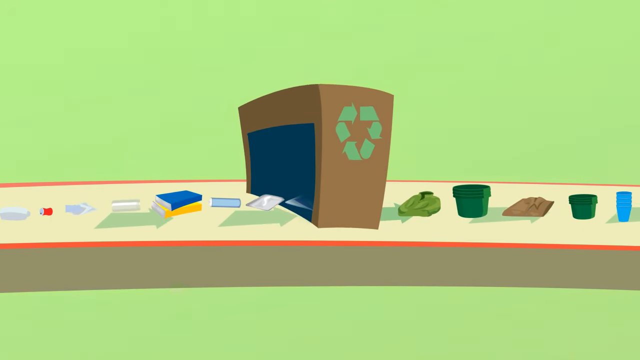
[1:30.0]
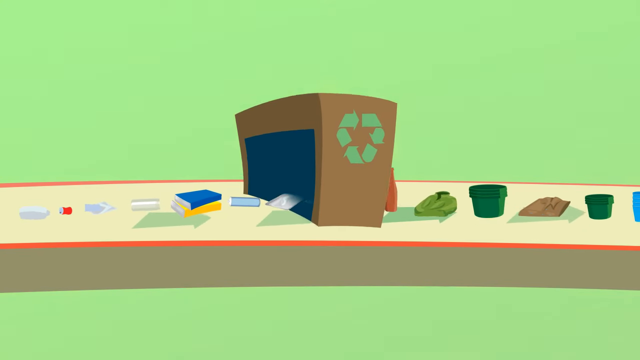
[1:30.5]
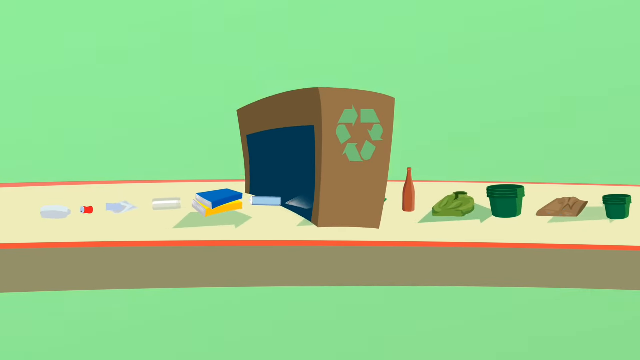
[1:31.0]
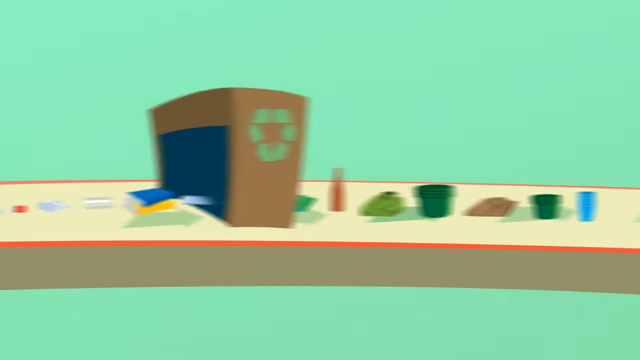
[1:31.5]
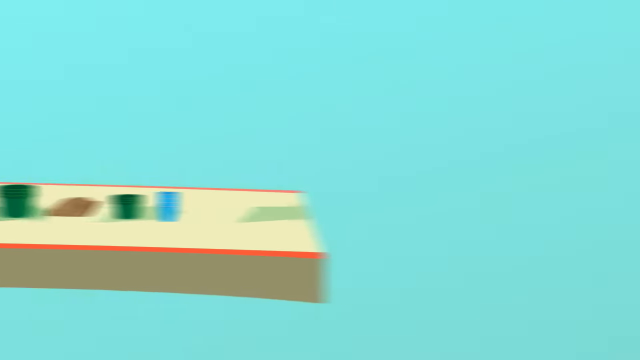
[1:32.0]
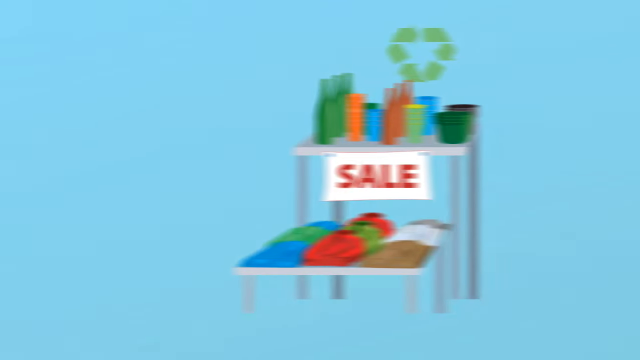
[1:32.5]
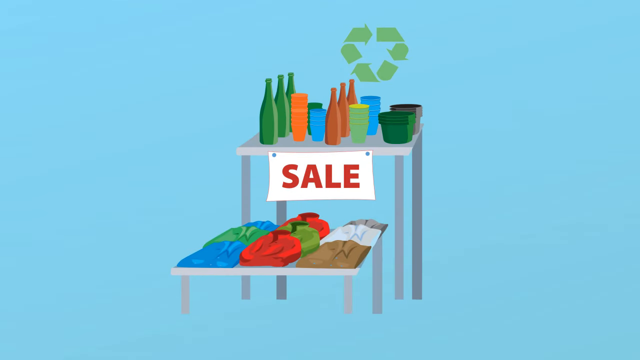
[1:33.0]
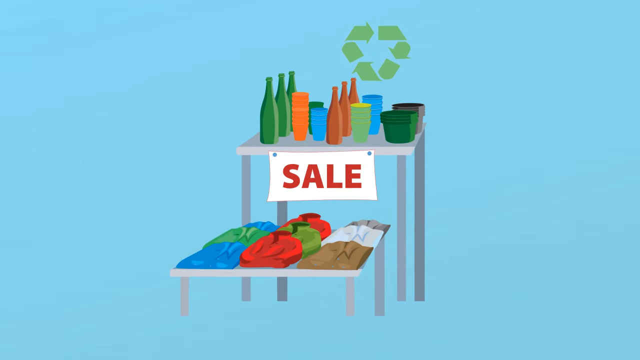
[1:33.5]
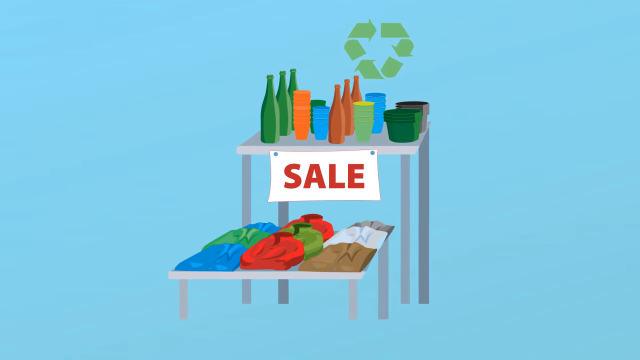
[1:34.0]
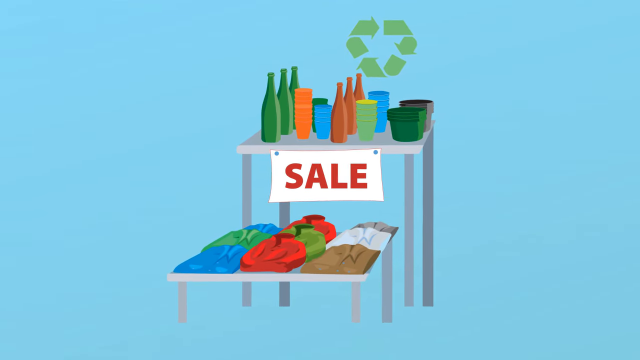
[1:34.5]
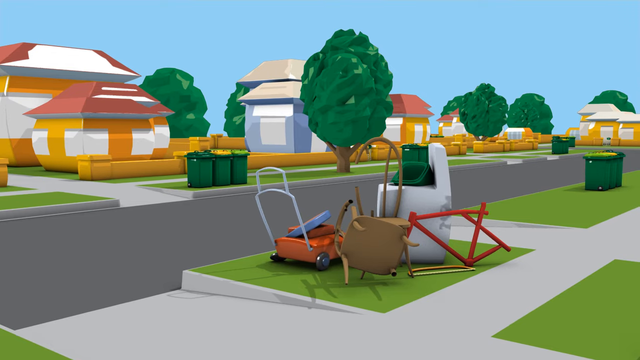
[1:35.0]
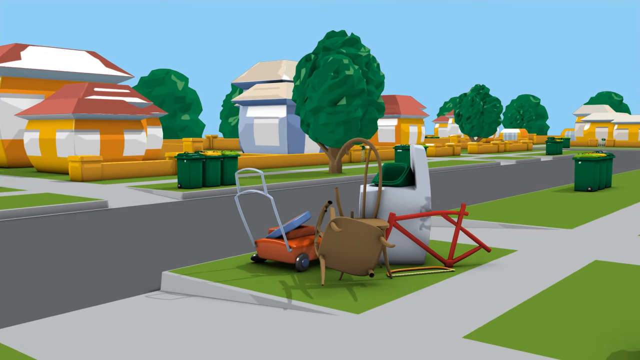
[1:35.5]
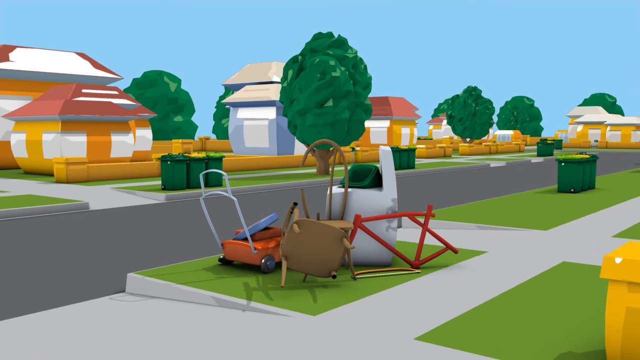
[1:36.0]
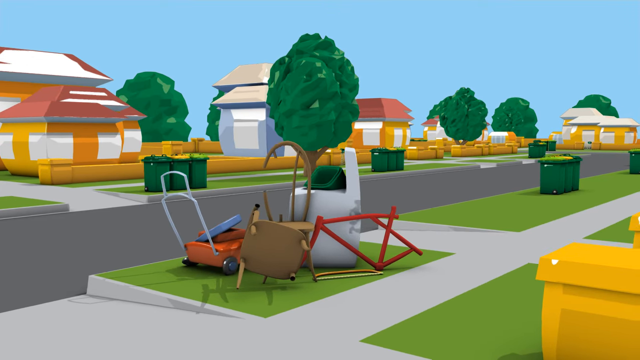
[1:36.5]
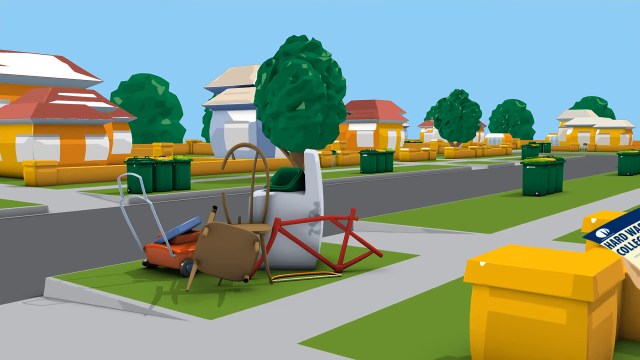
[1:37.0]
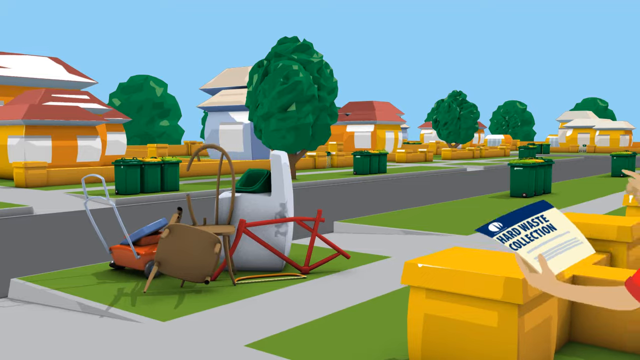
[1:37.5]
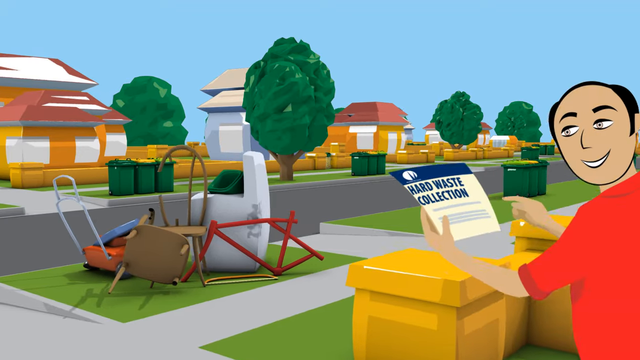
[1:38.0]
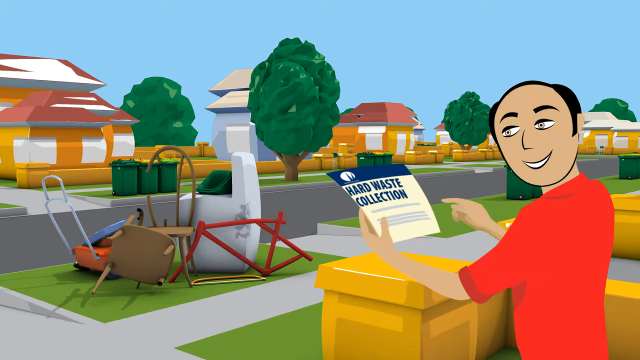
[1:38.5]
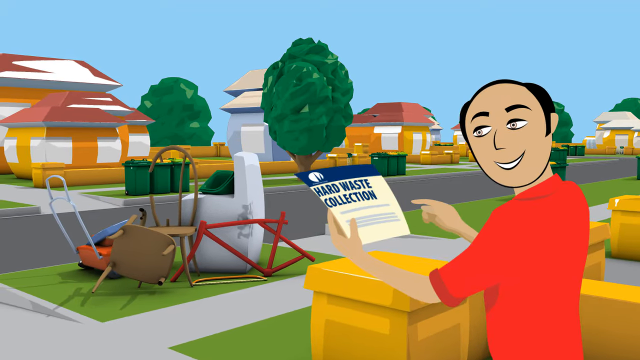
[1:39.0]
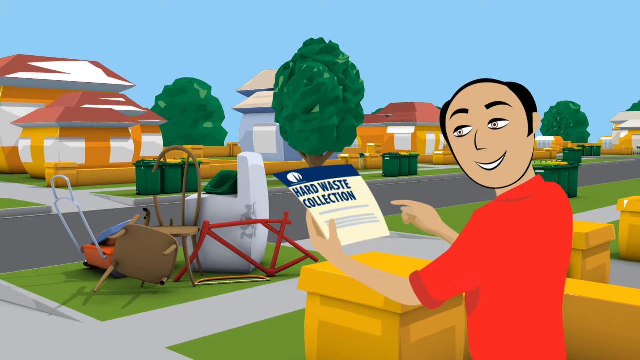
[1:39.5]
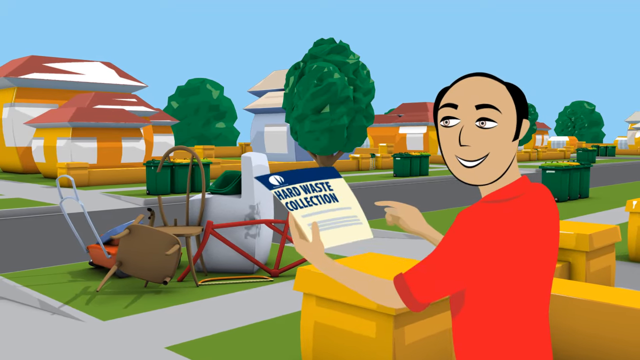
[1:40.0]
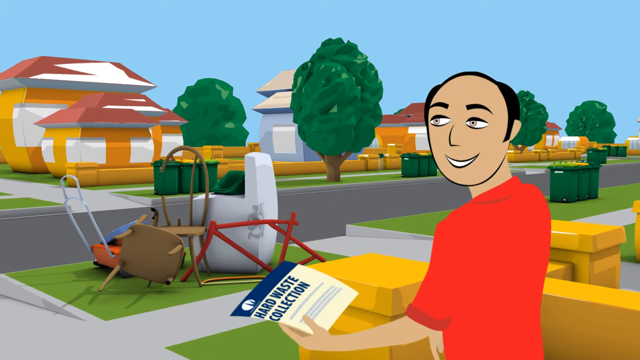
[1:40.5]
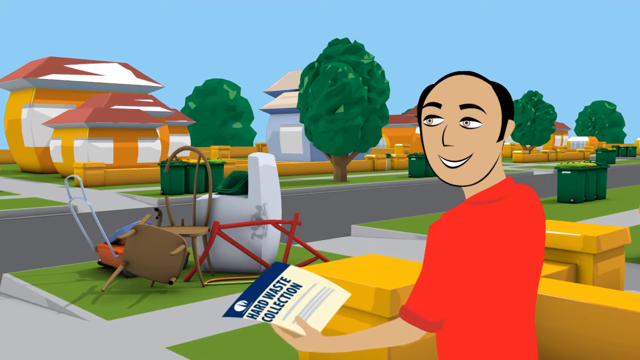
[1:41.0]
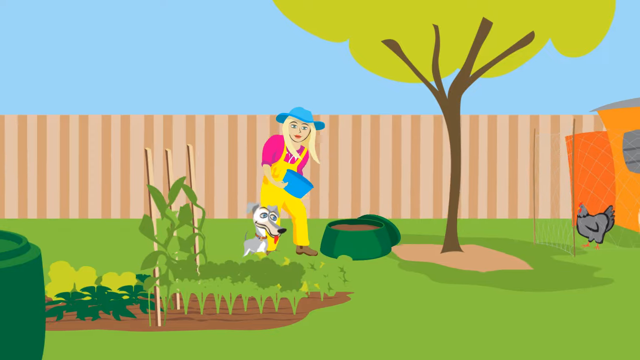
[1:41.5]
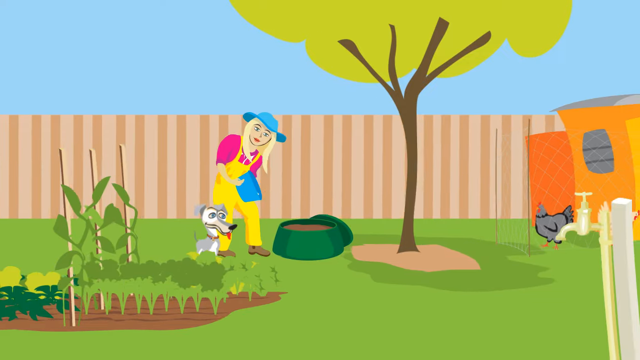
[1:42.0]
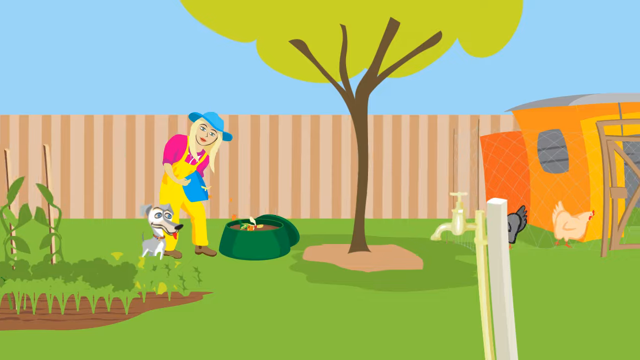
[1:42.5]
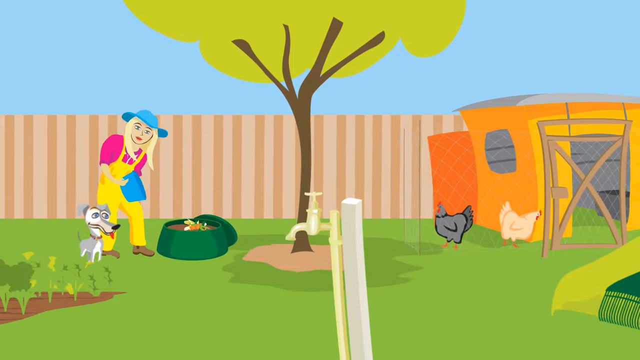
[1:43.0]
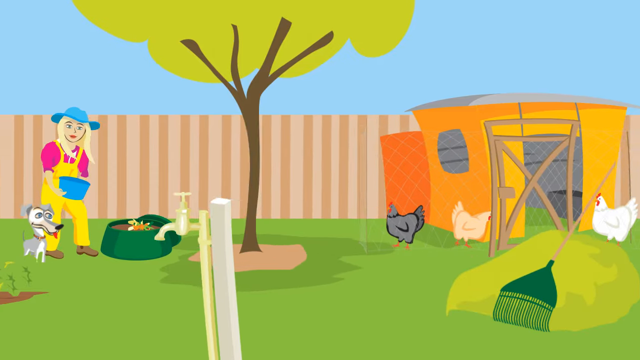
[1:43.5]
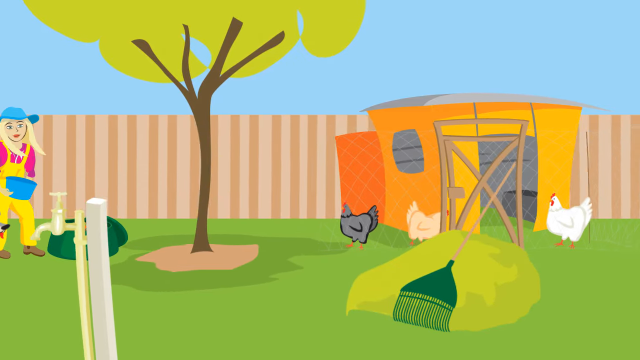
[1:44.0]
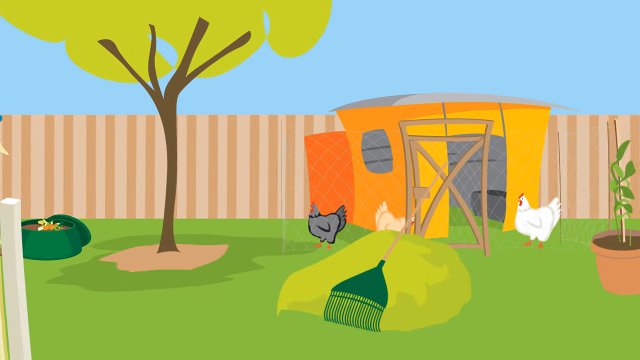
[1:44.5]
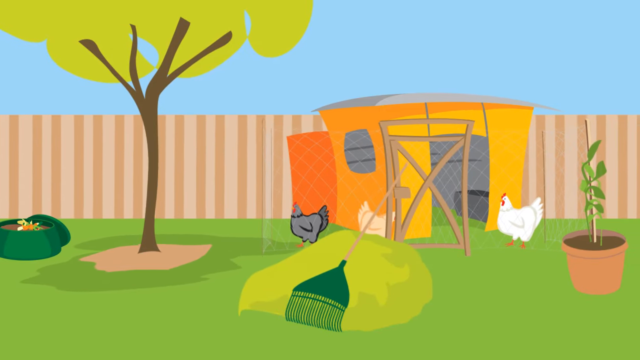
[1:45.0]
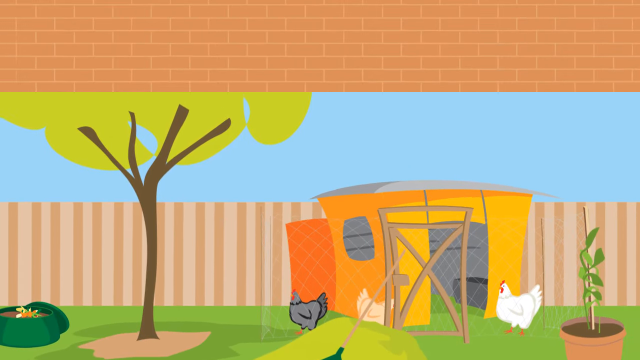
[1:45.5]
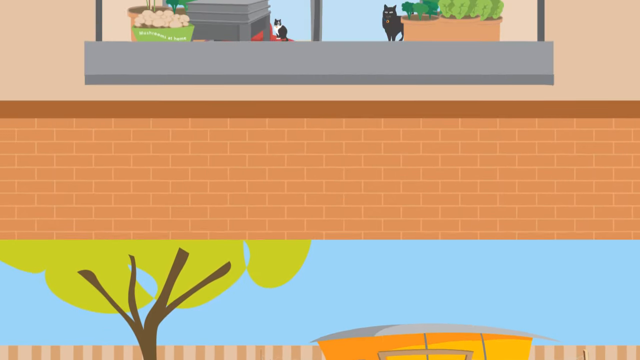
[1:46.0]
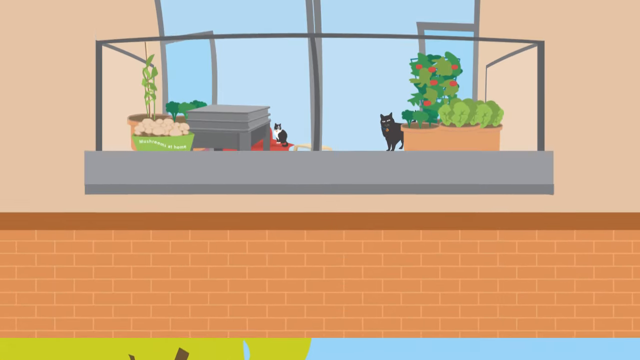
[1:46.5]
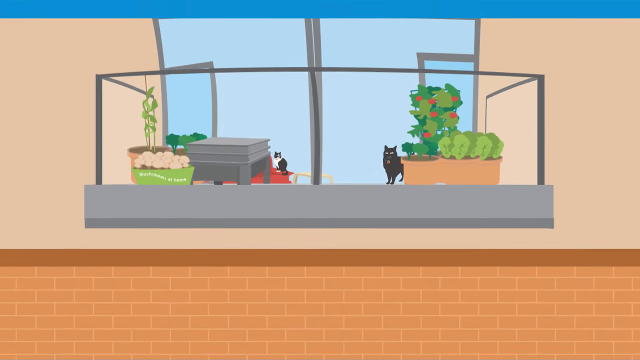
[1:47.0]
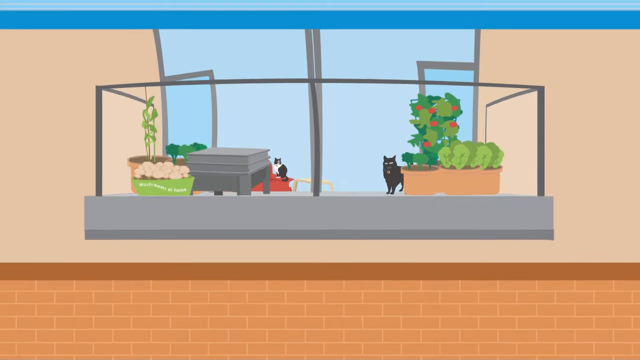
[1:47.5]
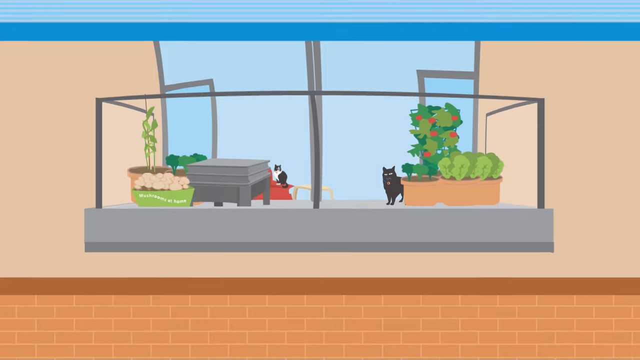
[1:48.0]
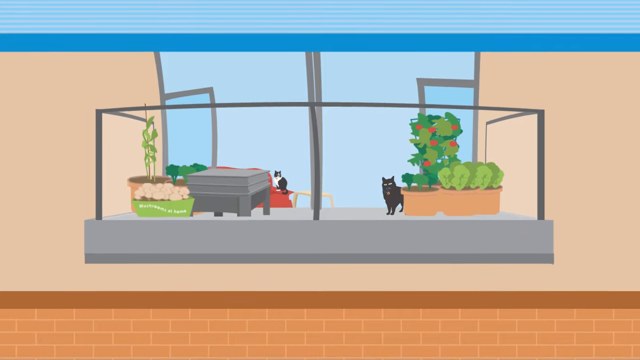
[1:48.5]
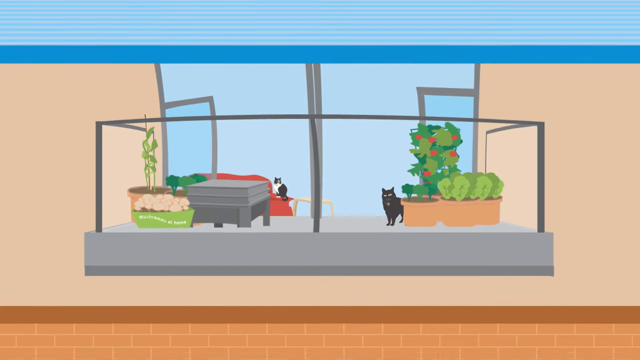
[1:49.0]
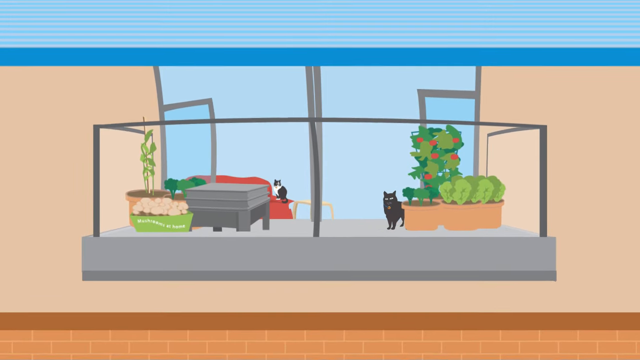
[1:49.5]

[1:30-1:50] A lot of waste appears, apparently on a conveyor belt. In the middle is a small brown box with an opening that the waste passes through, with the green three-arrow recycling logo on its side. On the conveyor belt there seem to be plastic containers, some compost, some books, a red can, and other kinds of waste. There are also two tables, one with a white sign with red writing that says "sell"; plastic containers and bottles are on the bottom table, and there are clothes. The view returns to the street, where there is a lot of waste, such as broken furniture and chairs. It then shows a man in a red shirt holding up a sign that says "waste yard waste collection." Next comes an image of a woman feeding her pets outside, and the view zooms up to a house above, showing the inside of an apartment with a bunch of cats in it.